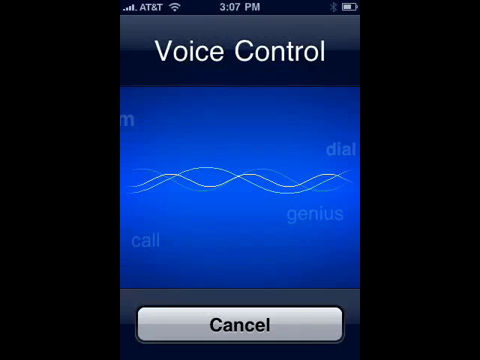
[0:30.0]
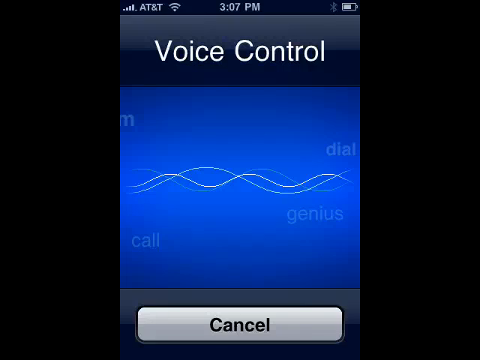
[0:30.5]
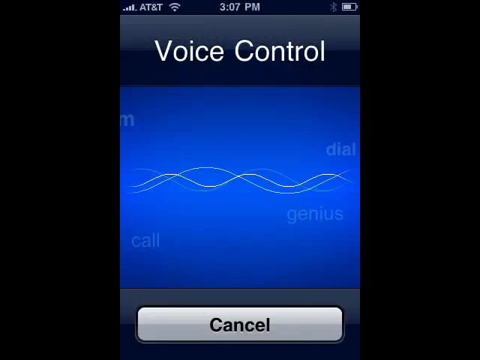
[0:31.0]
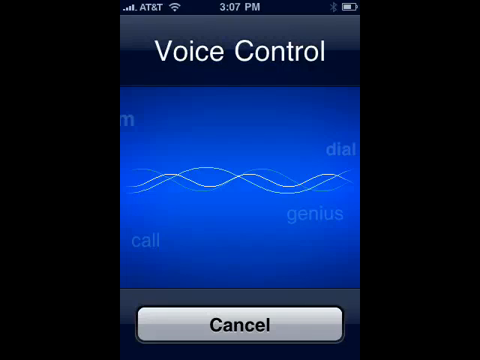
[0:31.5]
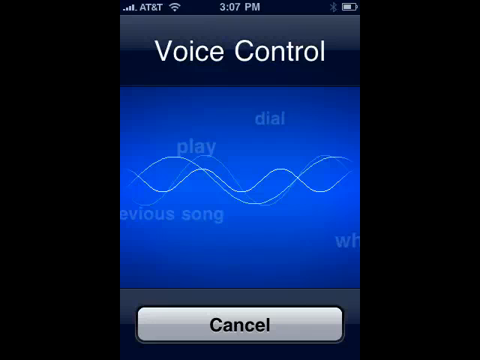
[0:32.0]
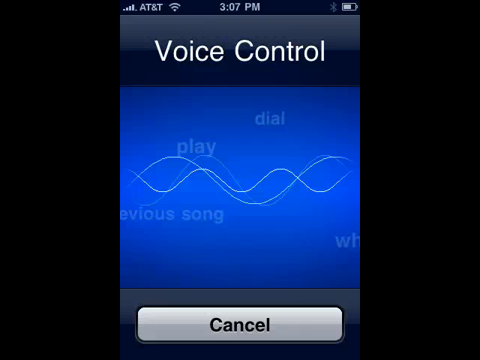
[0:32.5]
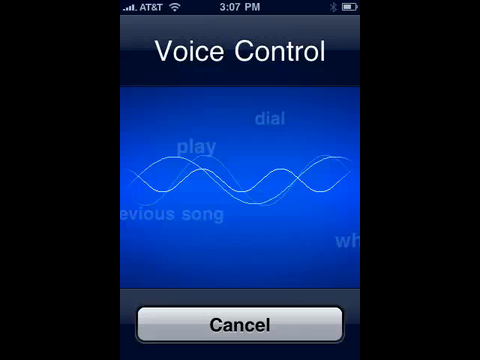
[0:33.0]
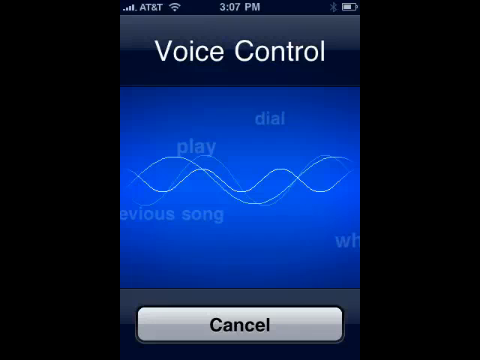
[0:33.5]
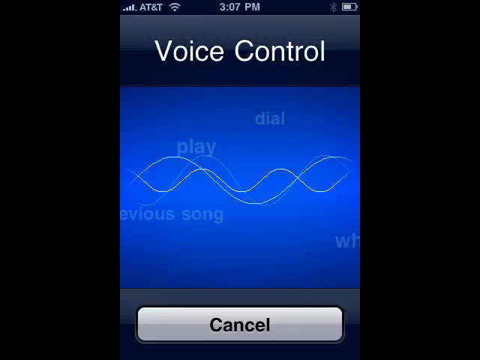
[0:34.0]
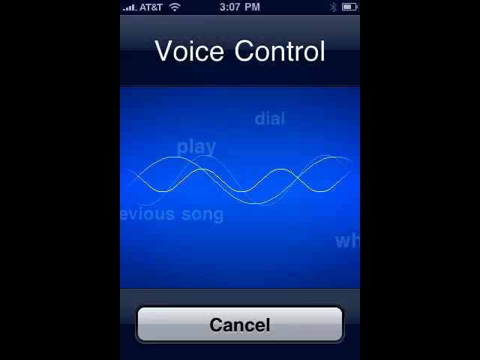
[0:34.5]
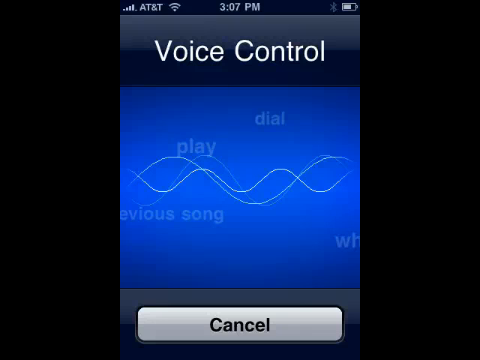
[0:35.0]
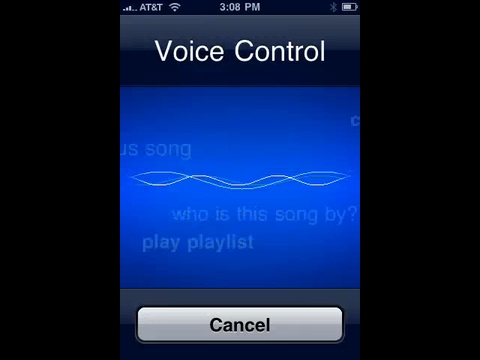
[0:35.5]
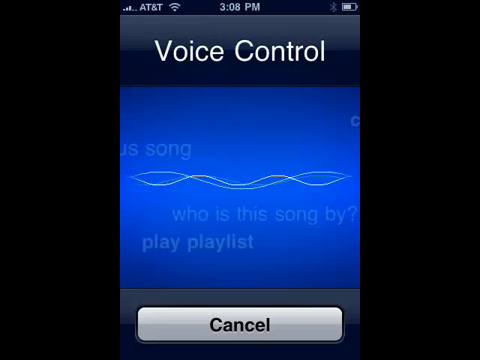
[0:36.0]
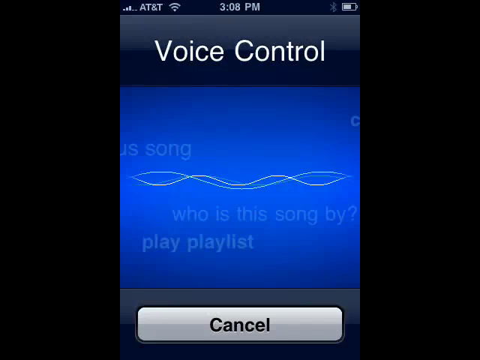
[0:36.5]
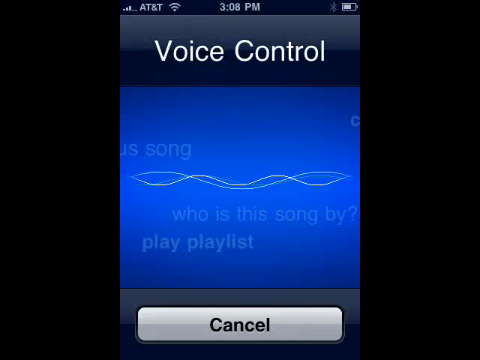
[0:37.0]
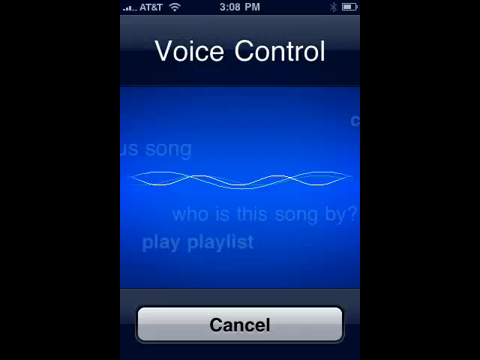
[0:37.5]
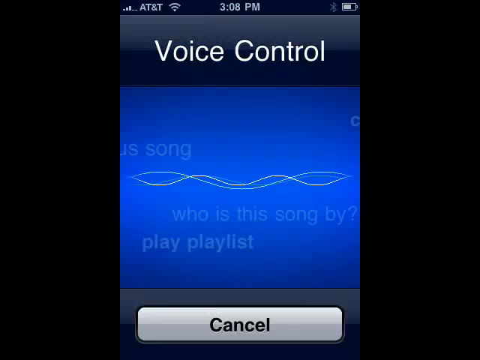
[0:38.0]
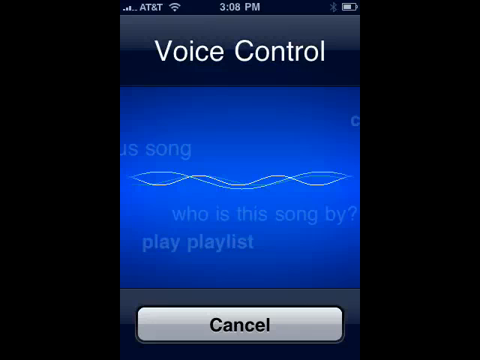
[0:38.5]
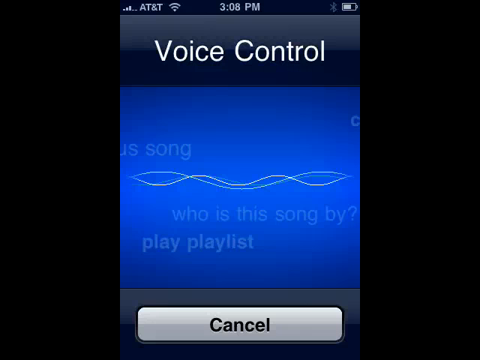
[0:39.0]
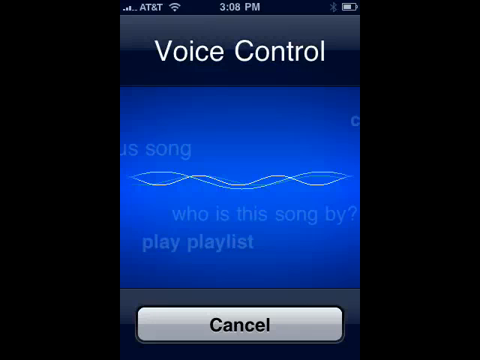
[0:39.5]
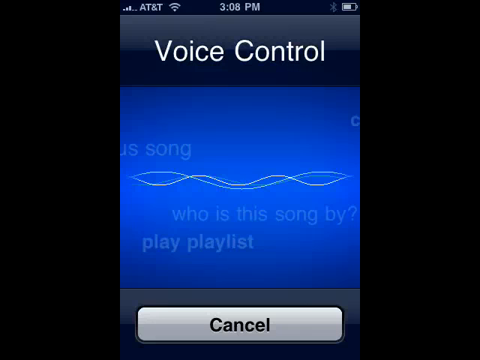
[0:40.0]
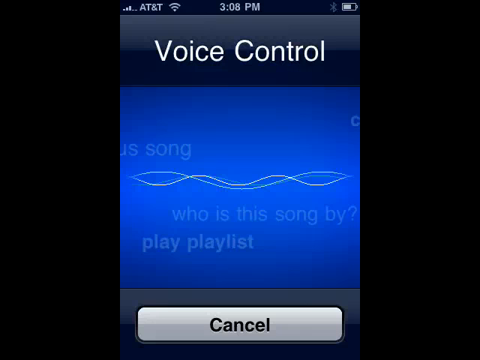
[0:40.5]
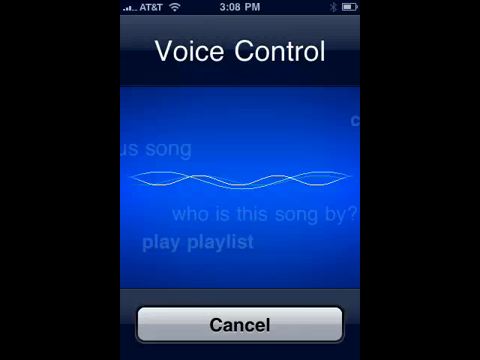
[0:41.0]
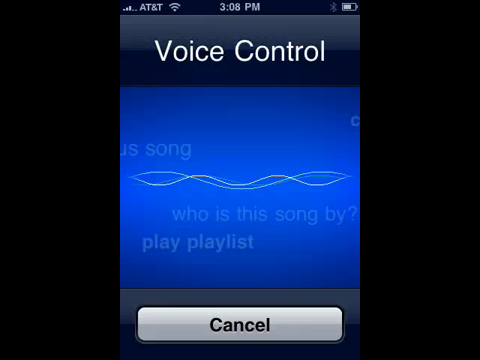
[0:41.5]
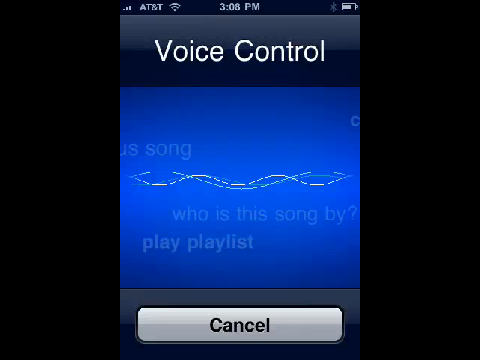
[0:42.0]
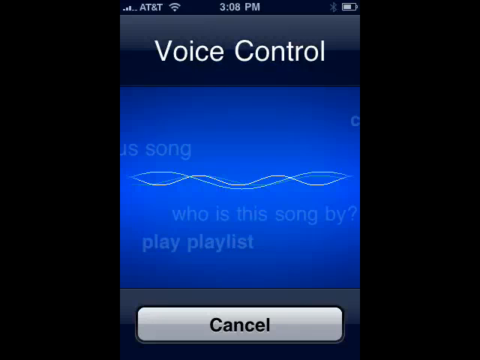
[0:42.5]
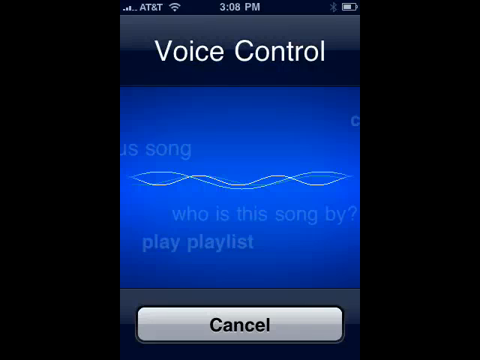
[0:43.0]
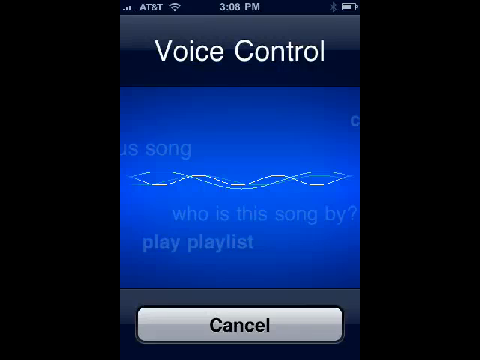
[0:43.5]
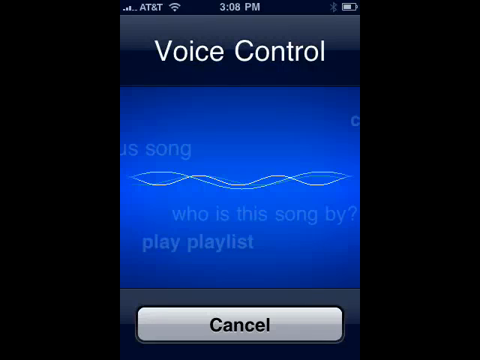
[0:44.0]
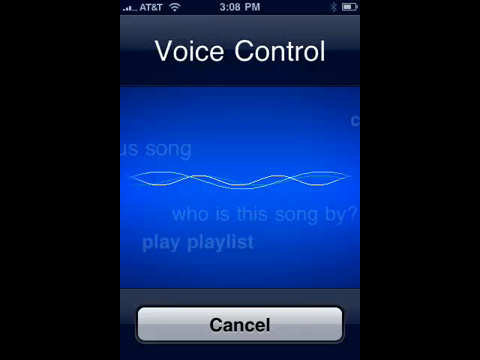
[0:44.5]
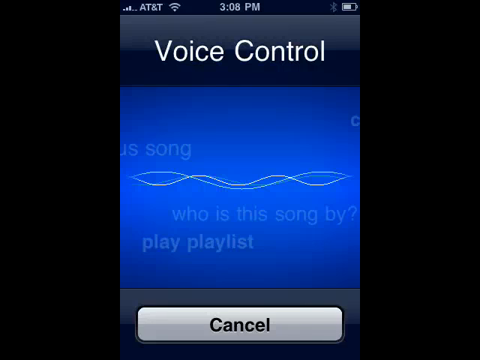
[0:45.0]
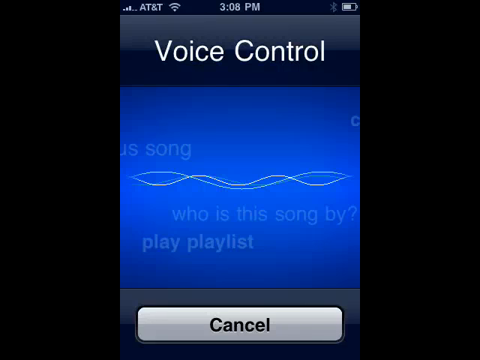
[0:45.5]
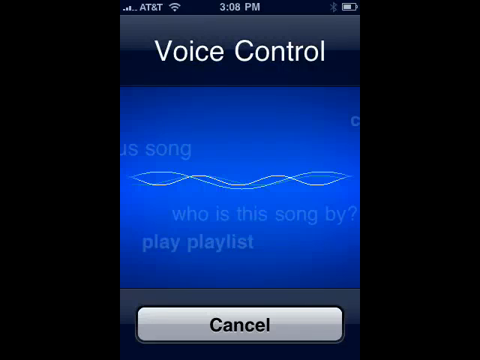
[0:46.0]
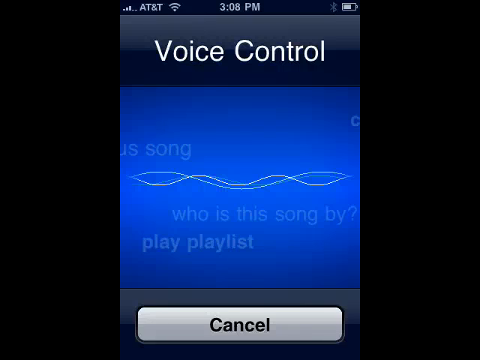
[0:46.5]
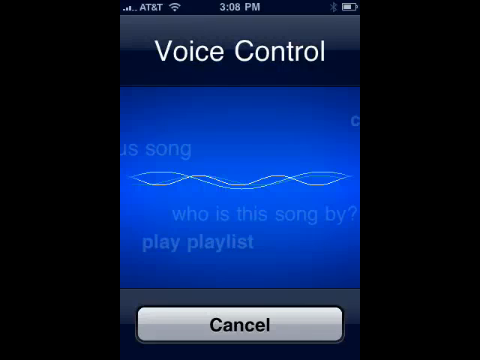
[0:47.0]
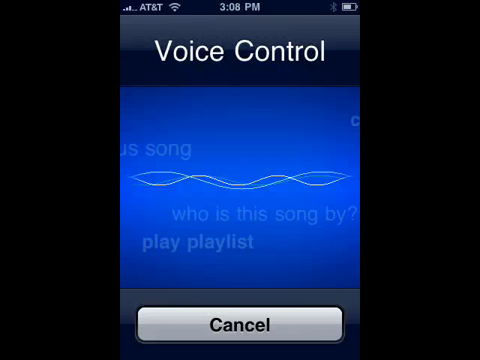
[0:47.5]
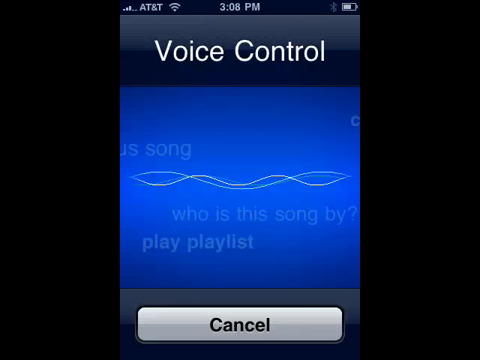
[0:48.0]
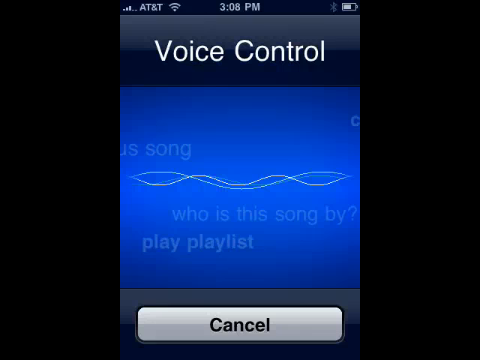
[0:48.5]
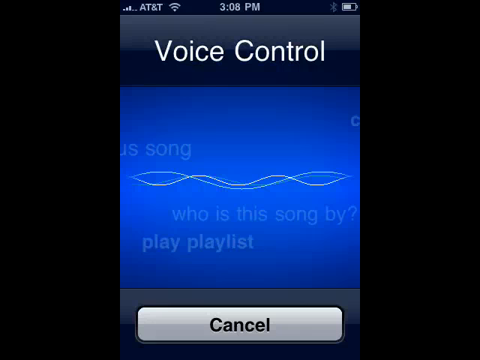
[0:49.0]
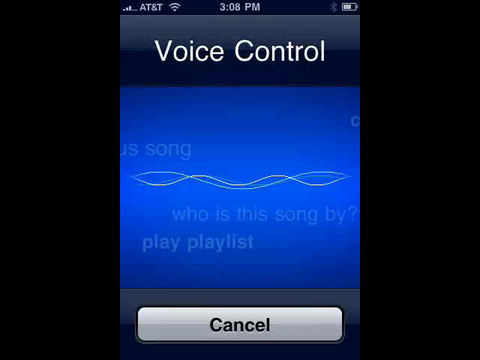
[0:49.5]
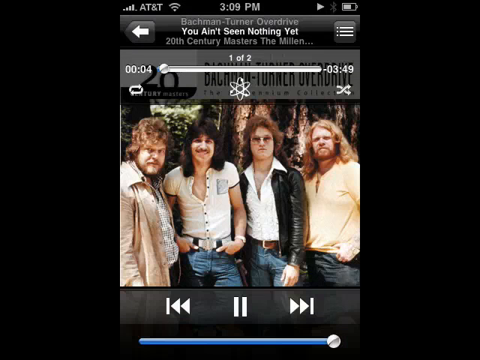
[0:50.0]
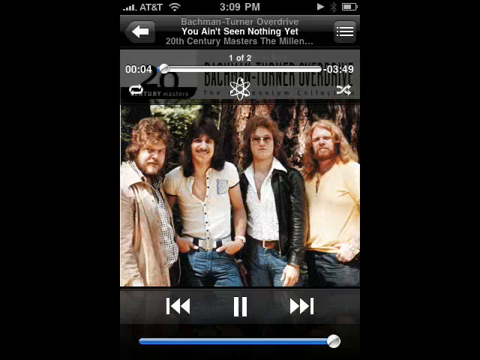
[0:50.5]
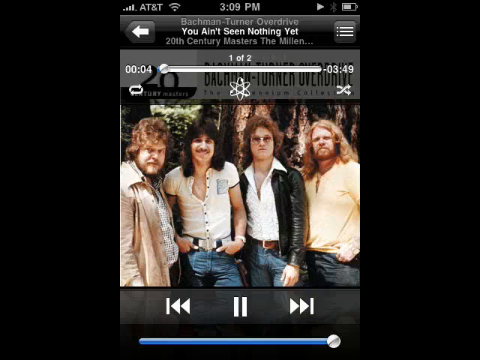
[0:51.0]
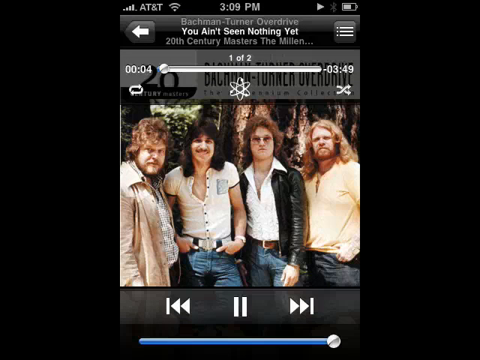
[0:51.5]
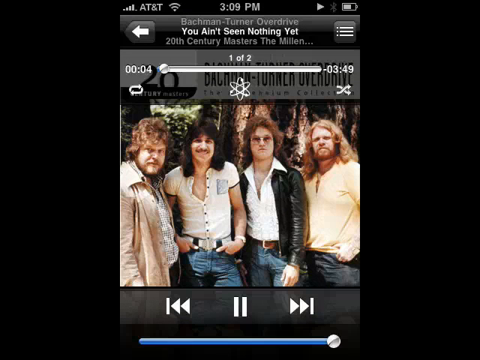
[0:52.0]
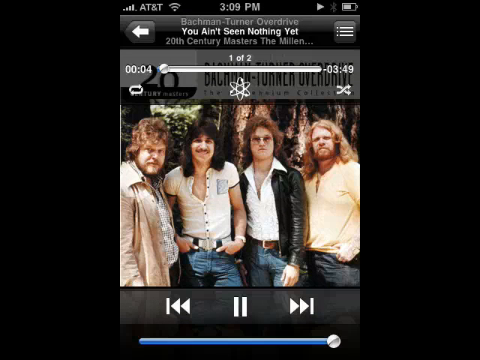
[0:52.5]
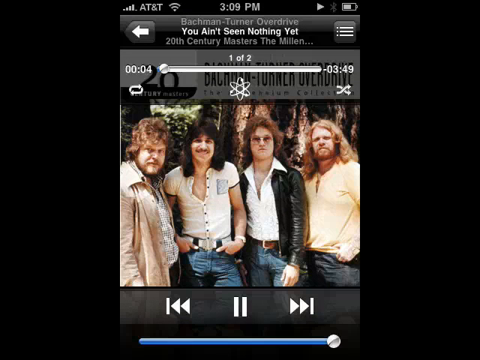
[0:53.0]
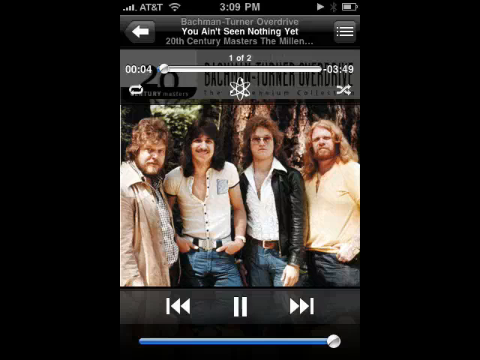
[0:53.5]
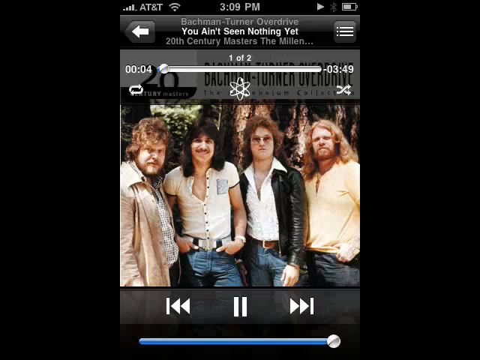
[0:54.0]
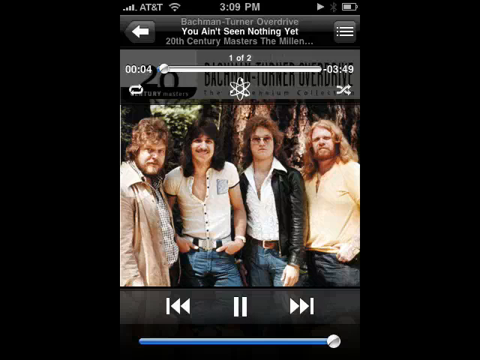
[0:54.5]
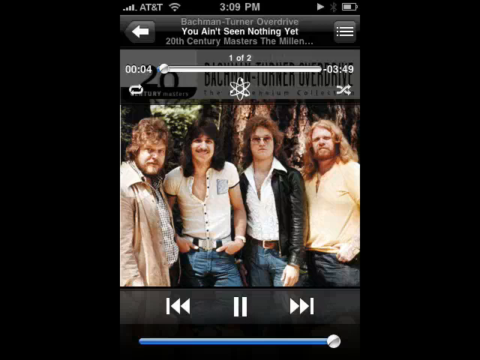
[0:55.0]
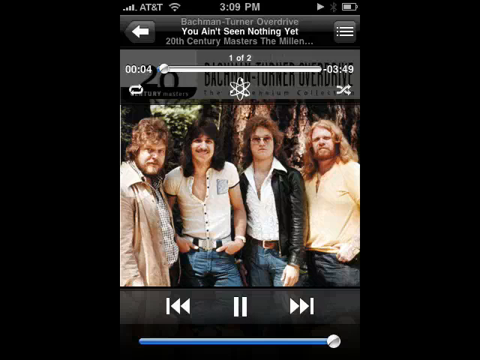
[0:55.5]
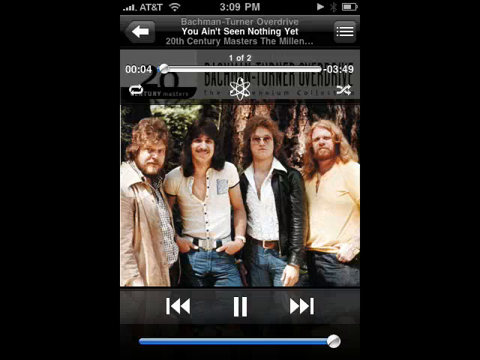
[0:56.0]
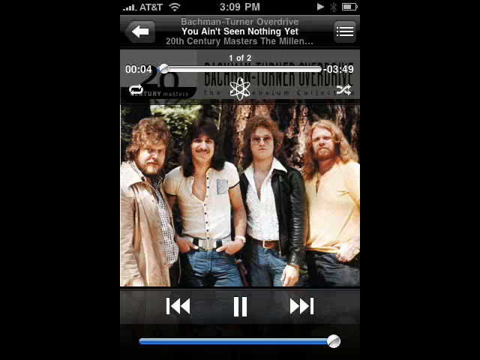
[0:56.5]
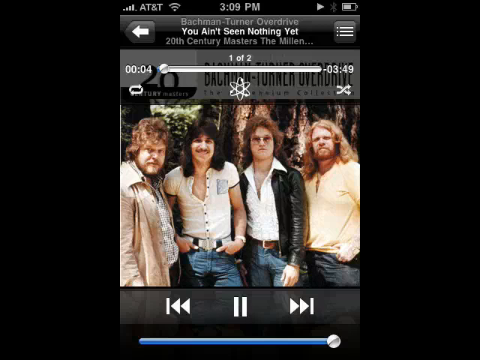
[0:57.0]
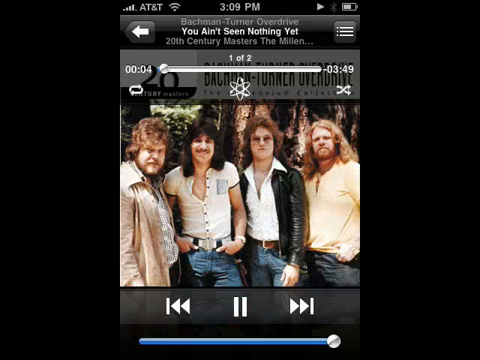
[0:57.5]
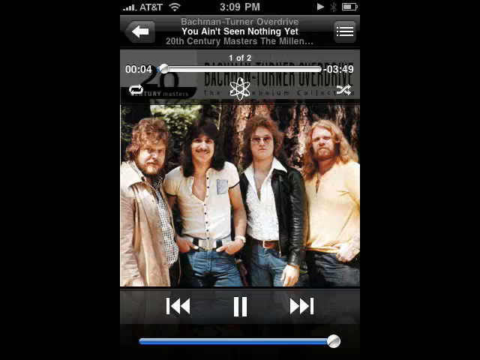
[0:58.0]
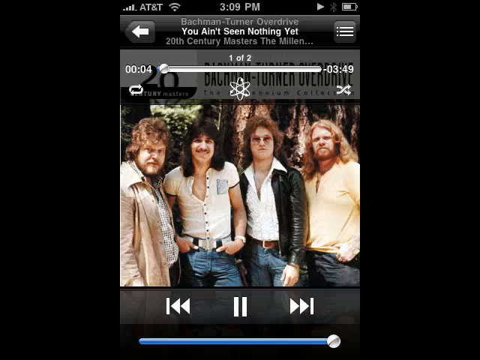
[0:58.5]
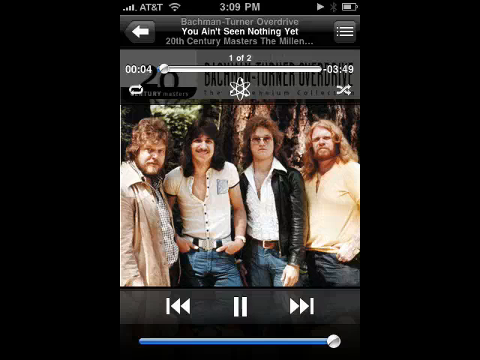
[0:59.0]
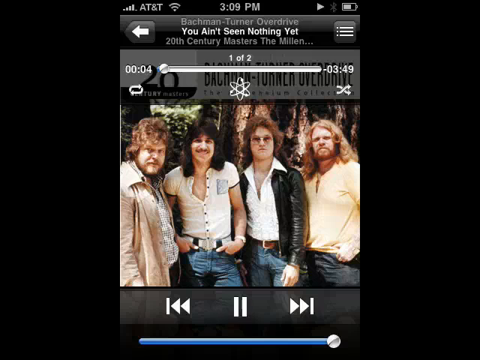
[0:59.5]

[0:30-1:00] A voice control panel is shown, with options to play the previous song, see who the song is by, and play a playlist. The screen displays information on how the voice control works, with options to call, dial, play a playlist of songs, or cancel. The information mostly shows who the song is by and the play playlist option. The playlist shows entries including "you ain't seen nothing yet" and "20th century masters", and a picture shows four men with white hair.